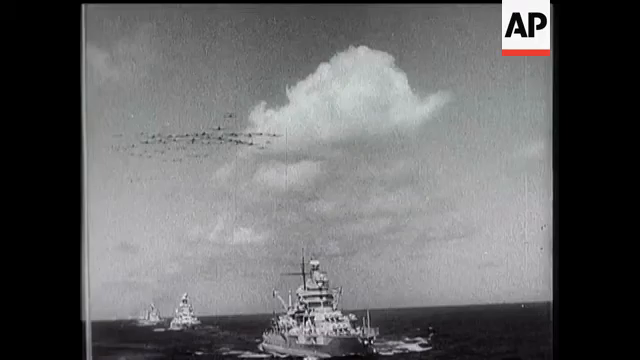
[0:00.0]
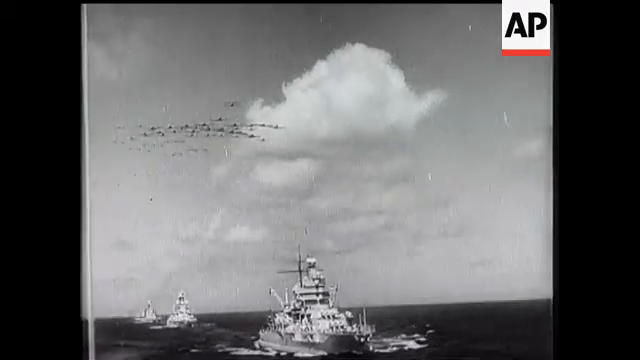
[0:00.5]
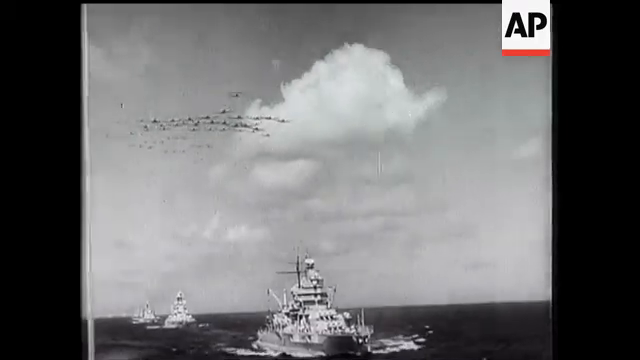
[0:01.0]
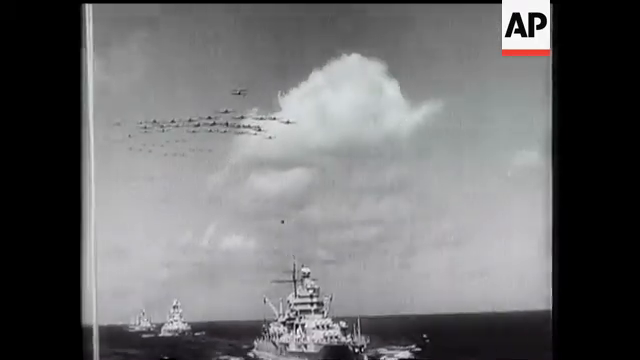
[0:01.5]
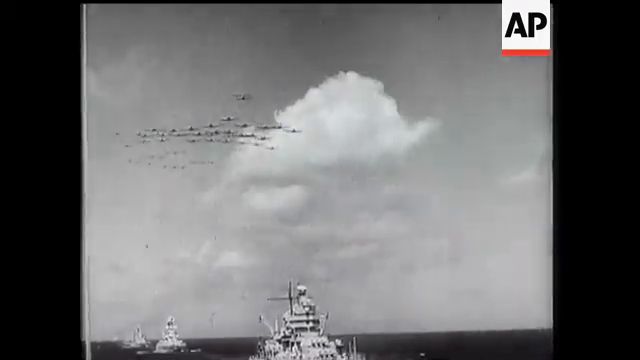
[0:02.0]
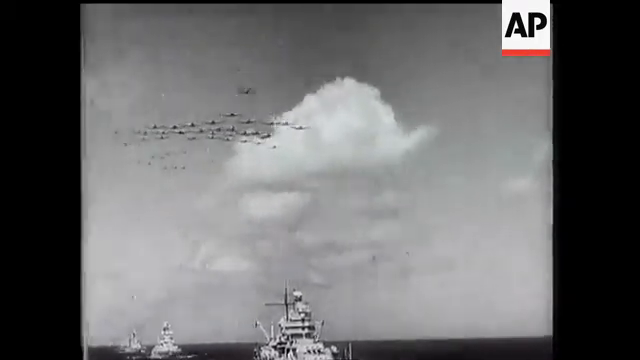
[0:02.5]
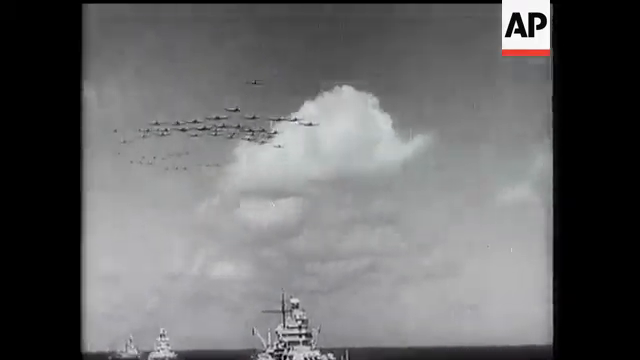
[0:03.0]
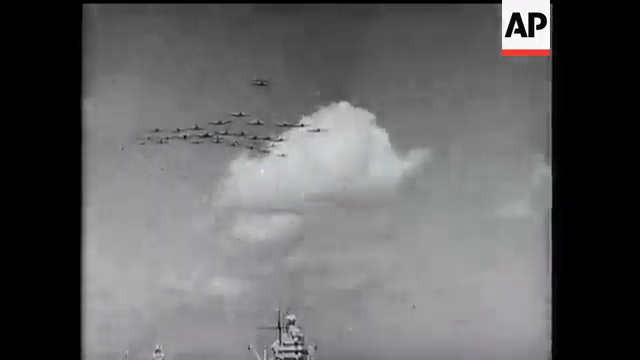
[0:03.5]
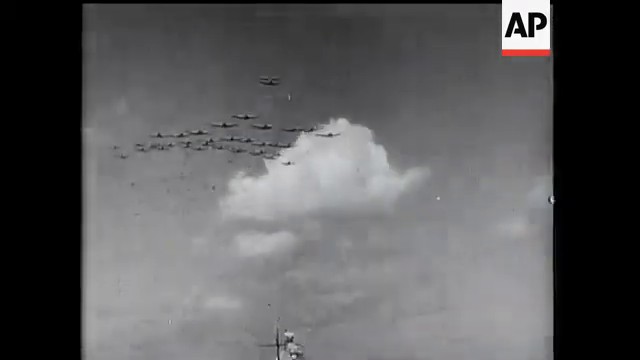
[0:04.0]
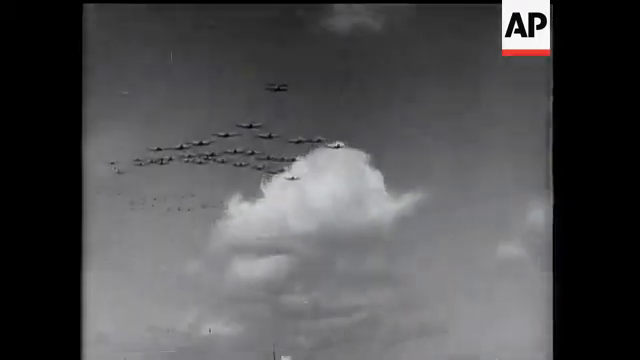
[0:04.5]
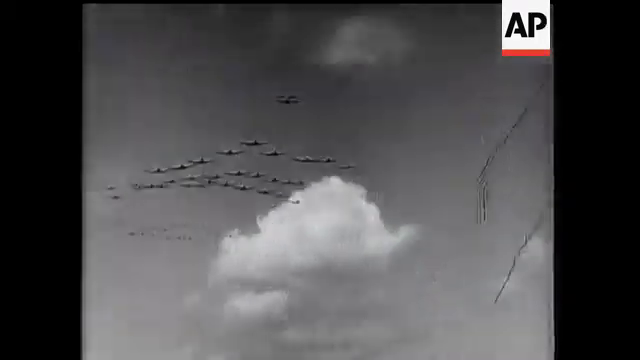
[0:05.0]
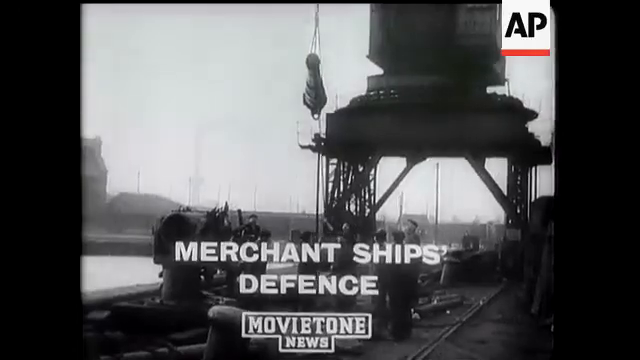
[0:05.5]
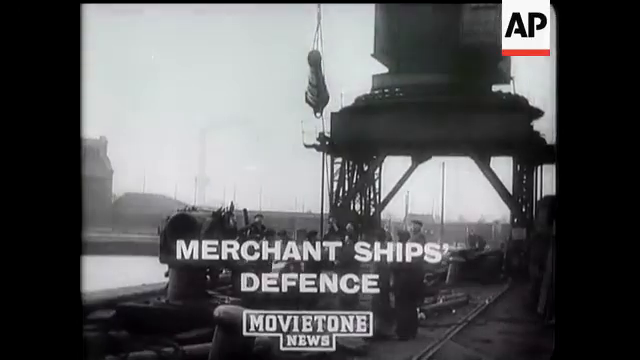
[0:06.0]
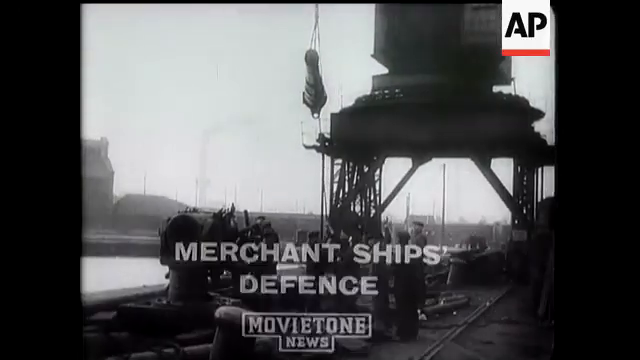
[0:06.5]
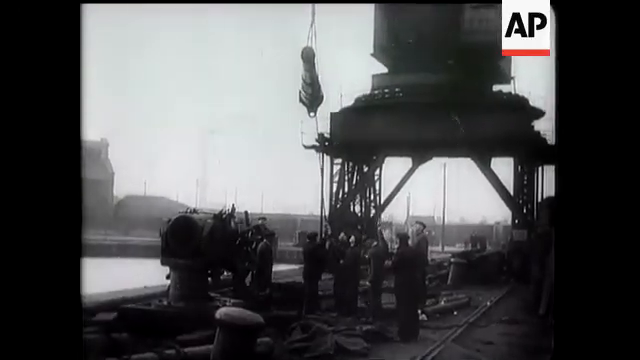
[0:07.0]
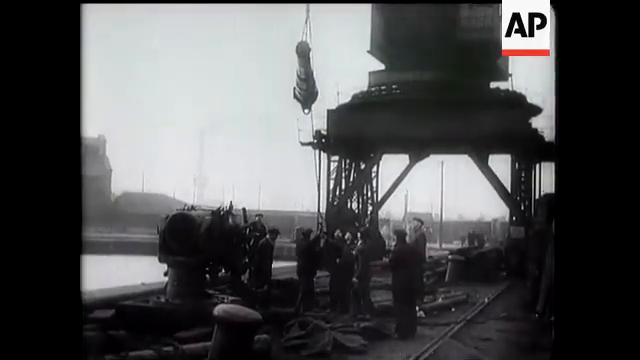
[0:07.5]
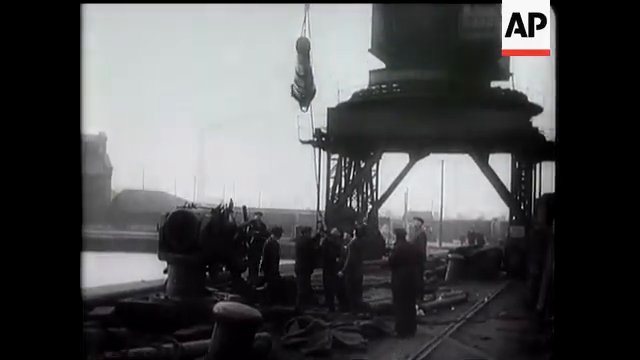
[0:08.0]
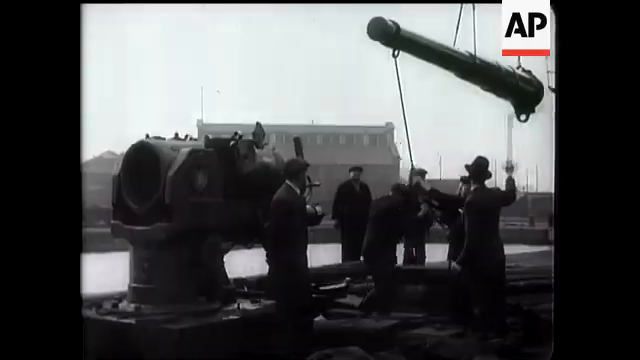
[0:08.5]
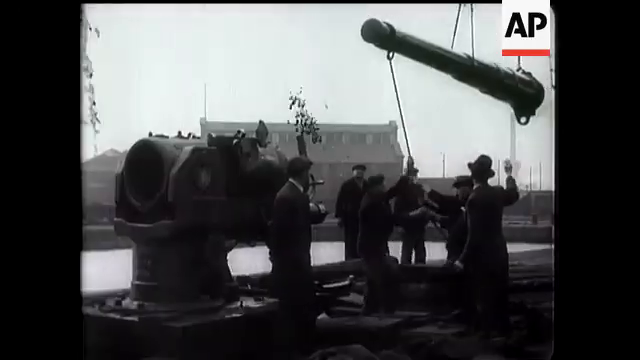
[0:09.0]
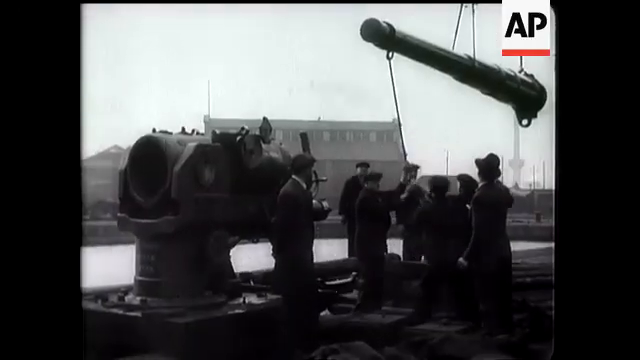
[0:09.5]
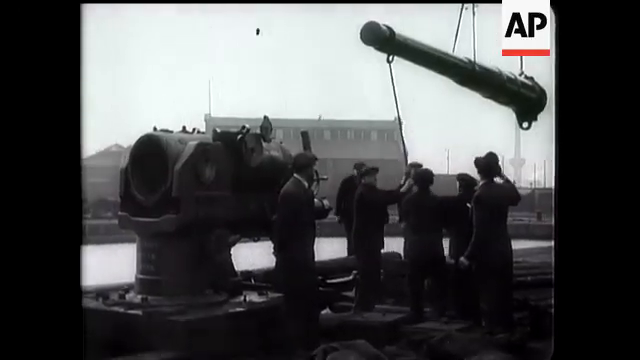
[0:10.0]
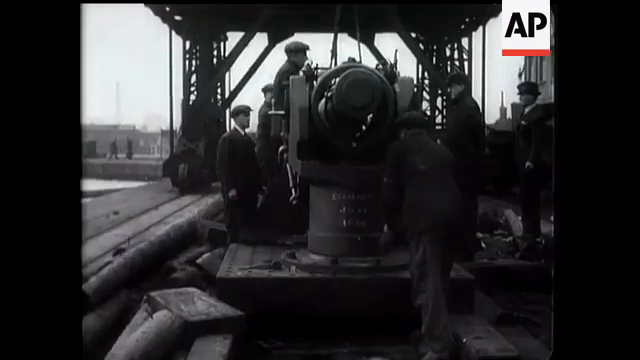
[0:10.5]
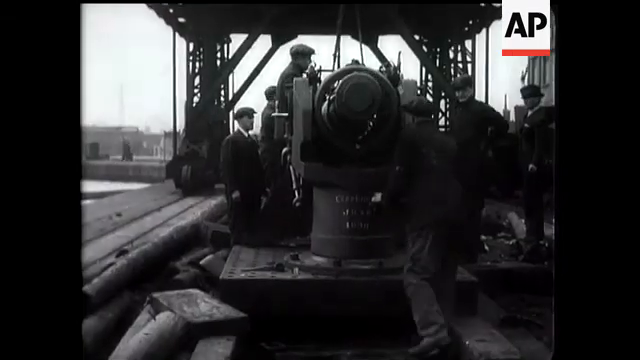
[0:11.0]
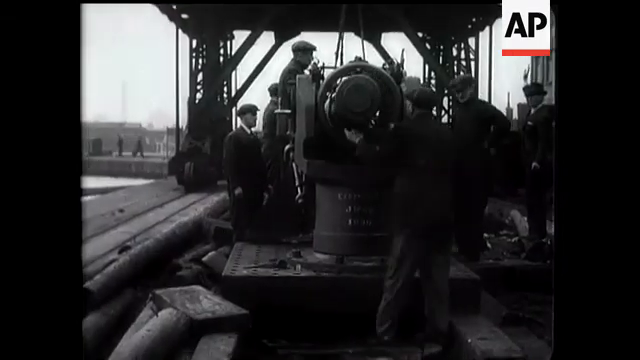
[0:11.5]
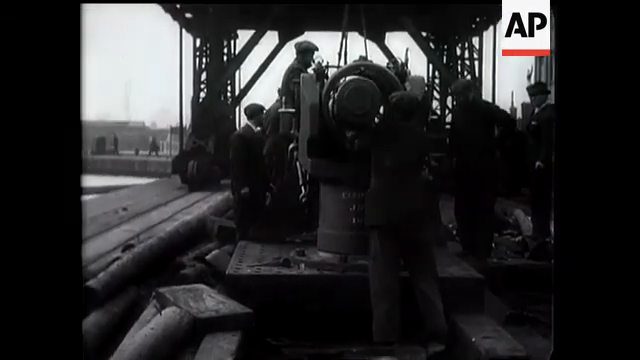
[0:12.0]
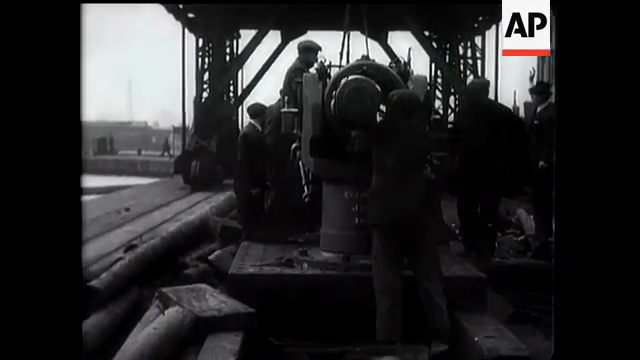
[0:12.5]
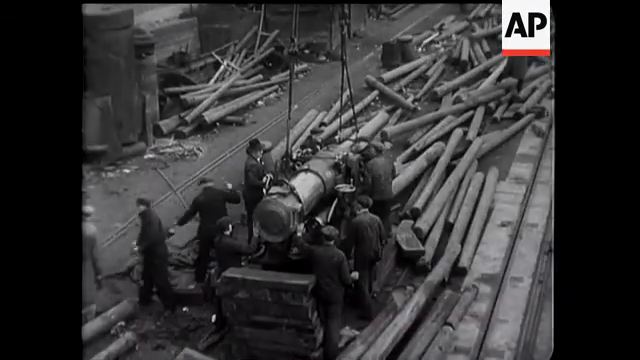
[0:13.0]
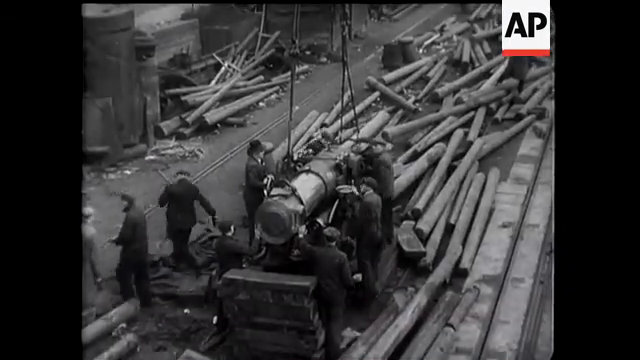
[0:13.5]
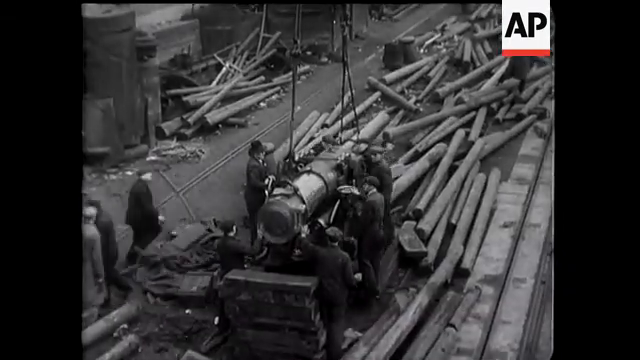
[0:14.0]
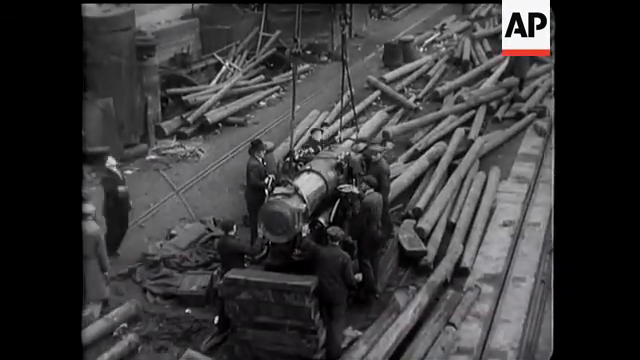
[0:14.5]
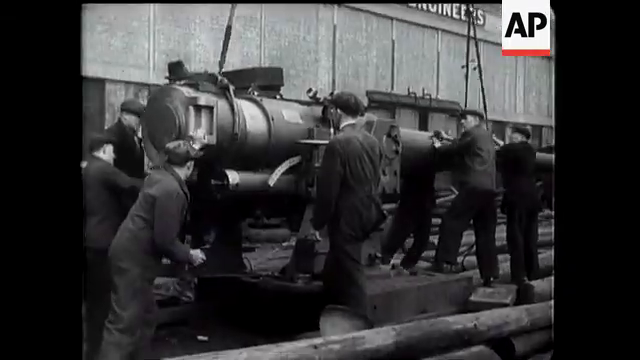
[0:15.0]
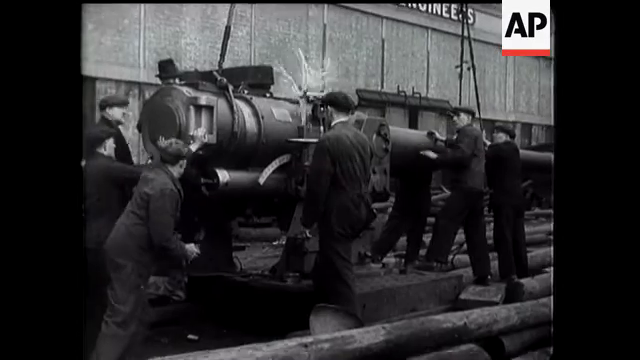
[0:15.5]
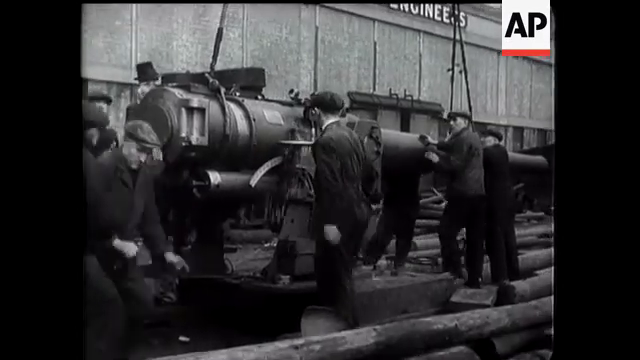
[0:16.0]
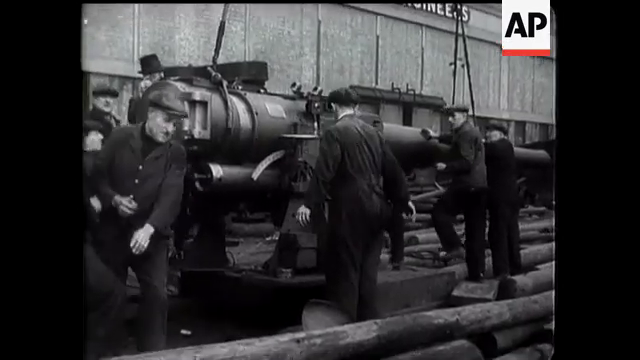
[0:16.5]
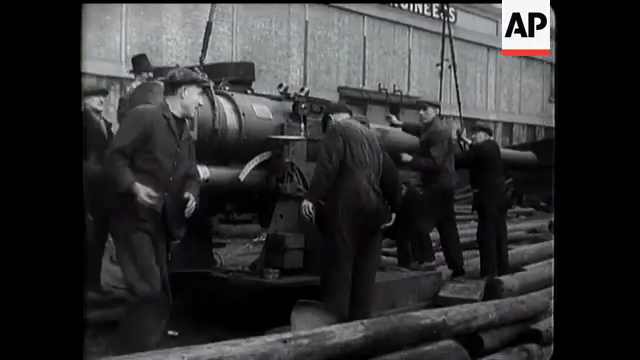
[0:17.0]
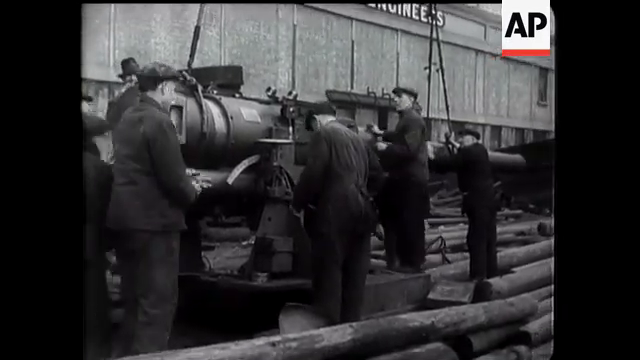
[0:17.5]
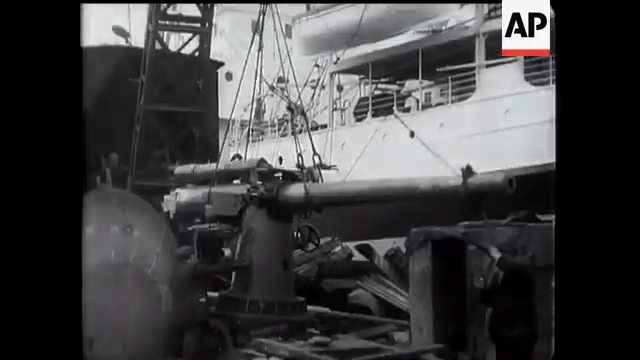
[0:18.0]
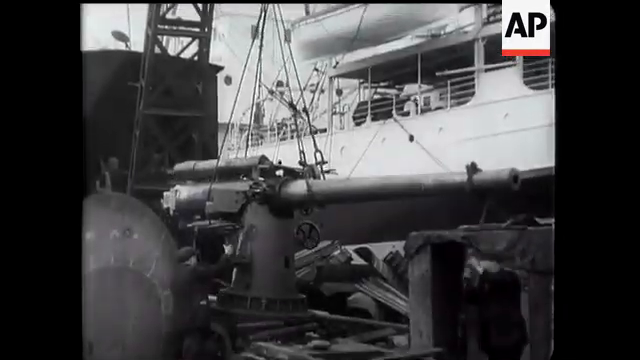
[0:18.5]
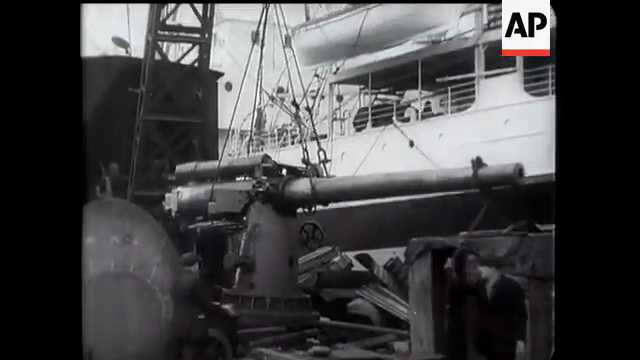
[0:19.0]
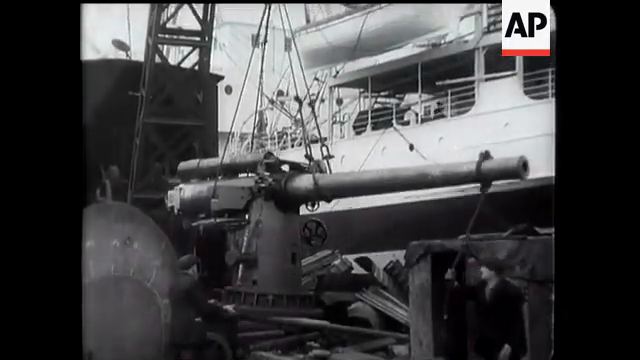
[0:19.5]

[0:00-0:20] The video is in black and white, with an AP logo in the upper right-hand corner: a rectangle that is mostly white with red at the bottom and the letters "AP" in bold black. Planes fly in formation, with one plane in front leading the way and the others extending out behind it like bowling pins: one, then two behind it, and so on. What look like two light-colored ships appear. Text reads "Merchant ships defense". Something that looks like a long pipe moves through the air, and once it lands, a group of people work with it, pushing it in, apparently putting the pieces together. The result appears to be a cannon, and it is definitely a military weapon.